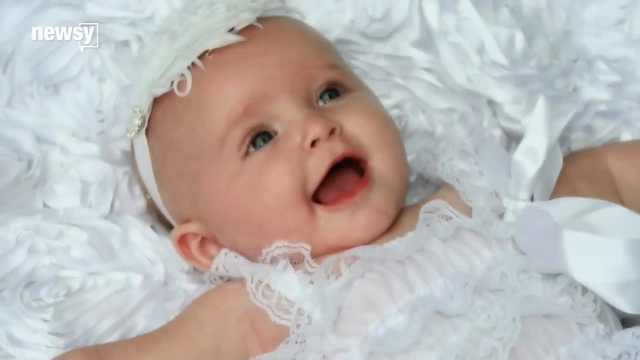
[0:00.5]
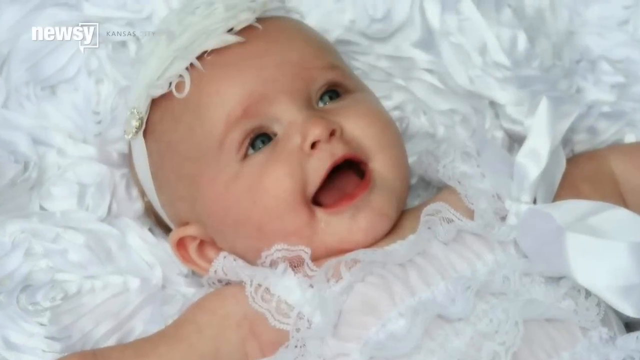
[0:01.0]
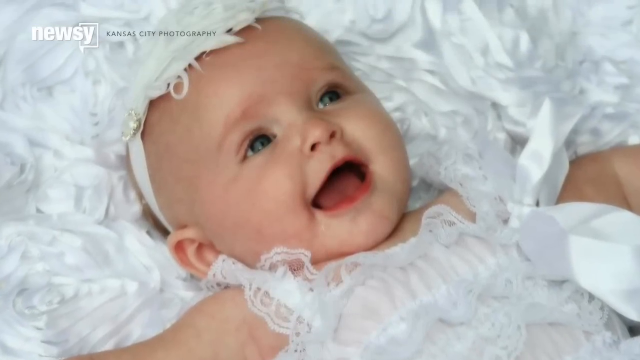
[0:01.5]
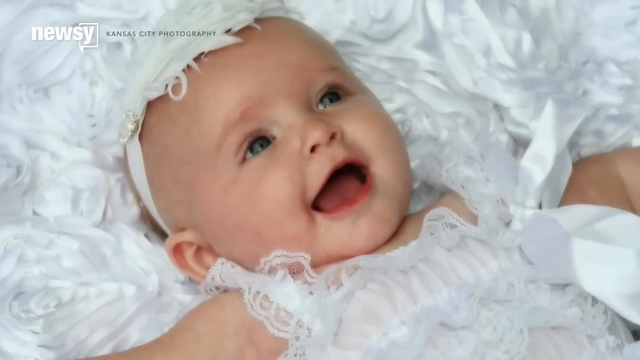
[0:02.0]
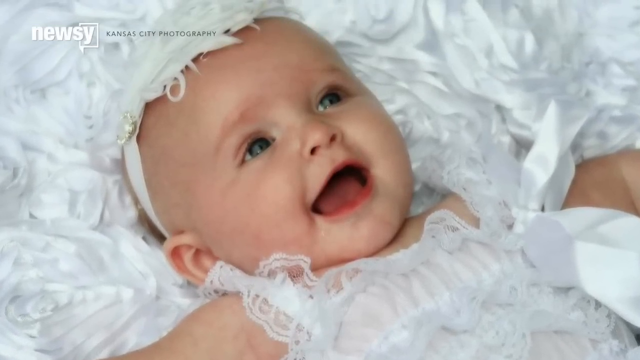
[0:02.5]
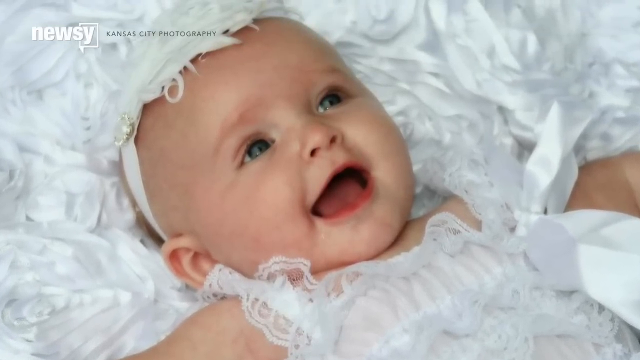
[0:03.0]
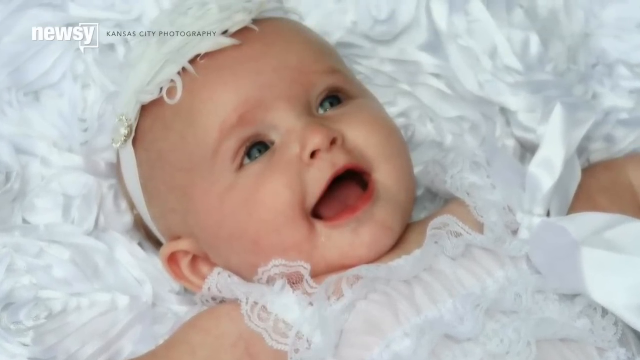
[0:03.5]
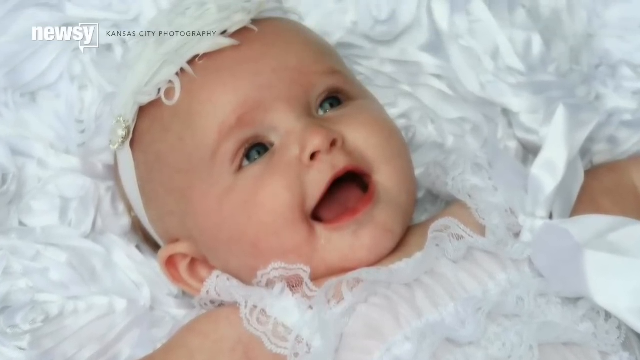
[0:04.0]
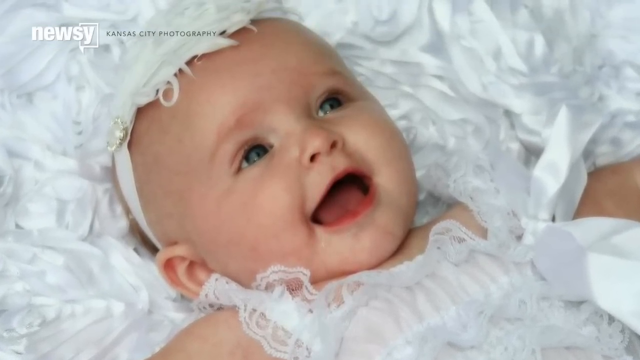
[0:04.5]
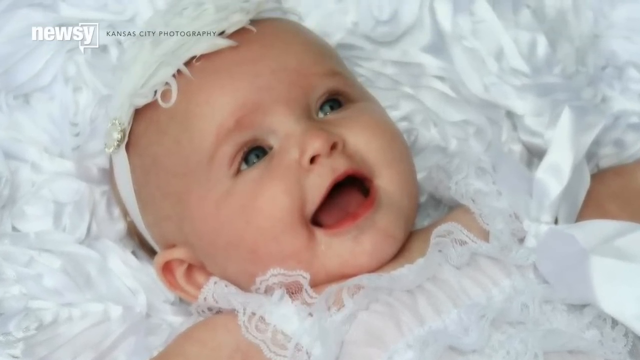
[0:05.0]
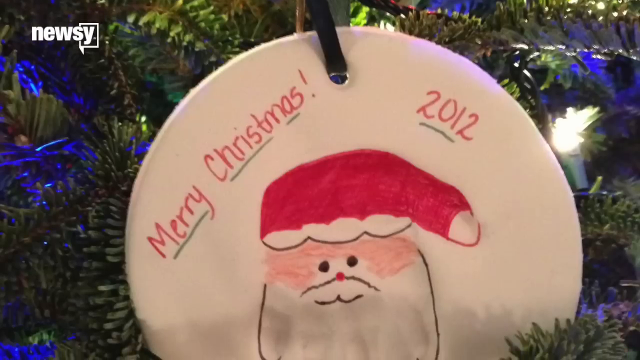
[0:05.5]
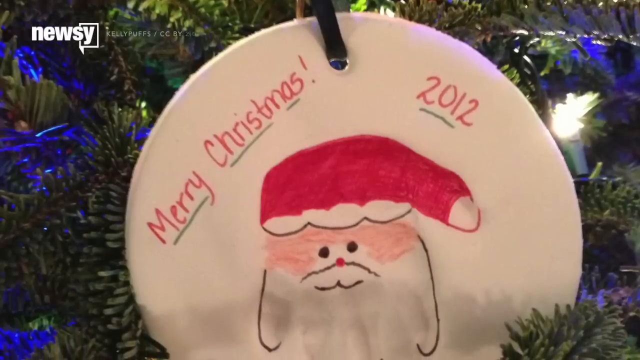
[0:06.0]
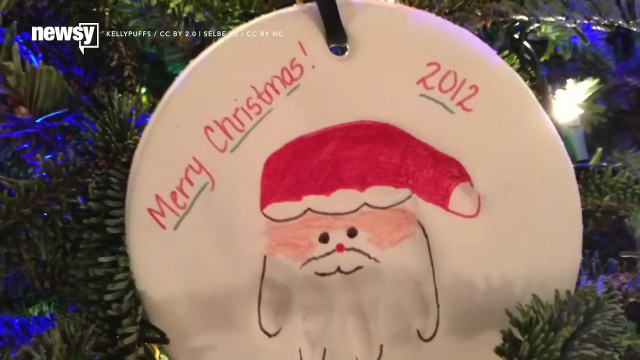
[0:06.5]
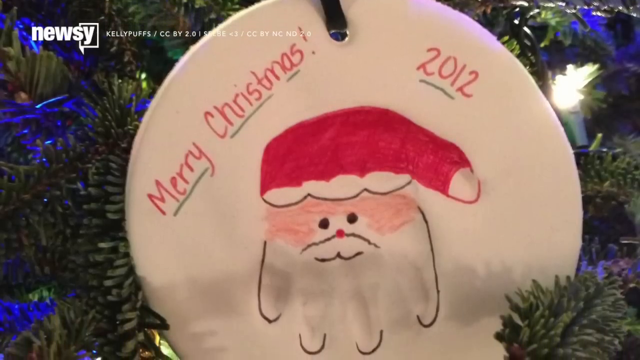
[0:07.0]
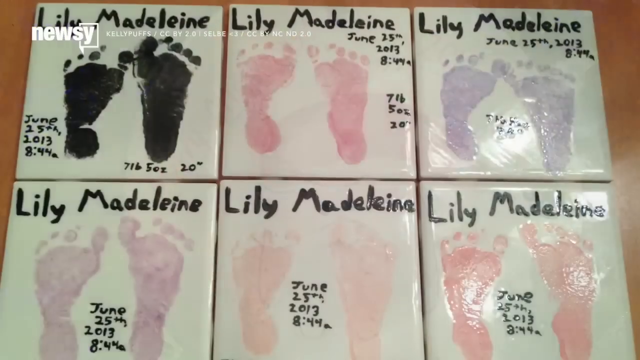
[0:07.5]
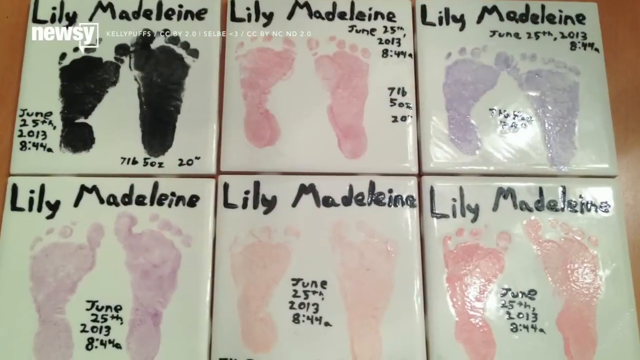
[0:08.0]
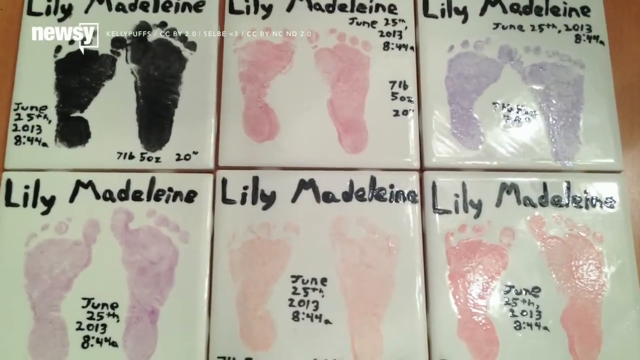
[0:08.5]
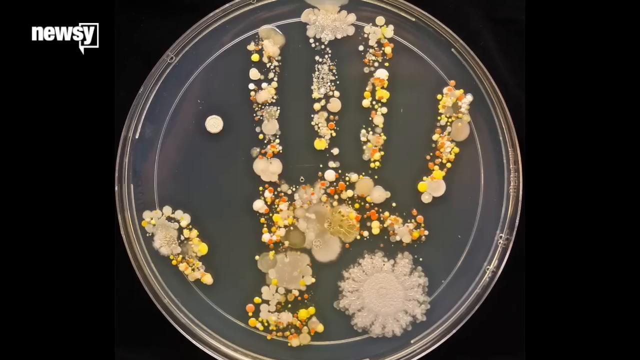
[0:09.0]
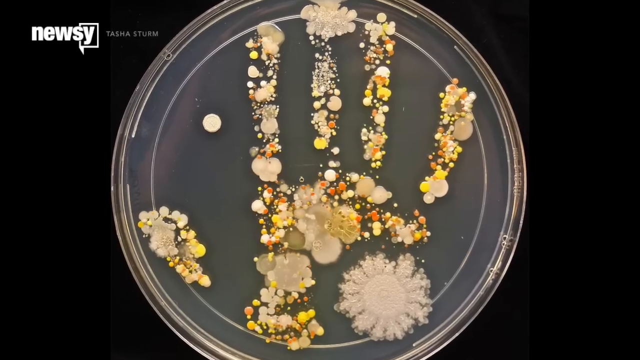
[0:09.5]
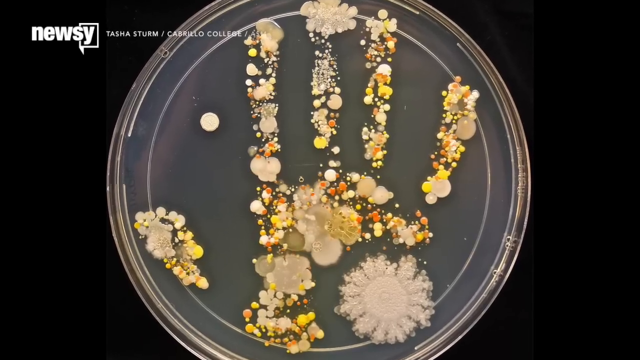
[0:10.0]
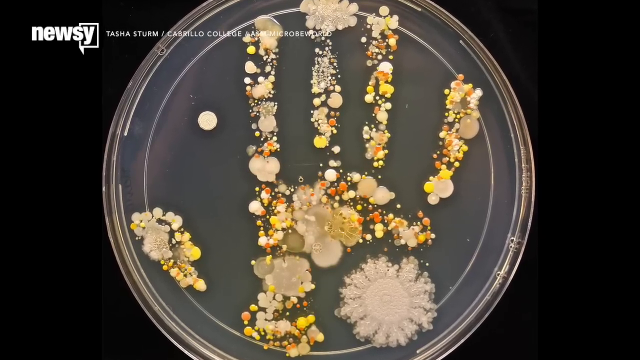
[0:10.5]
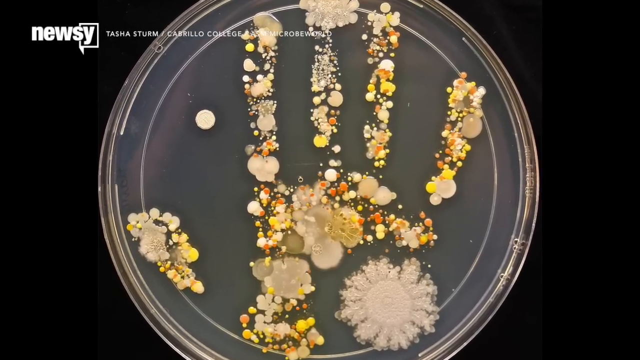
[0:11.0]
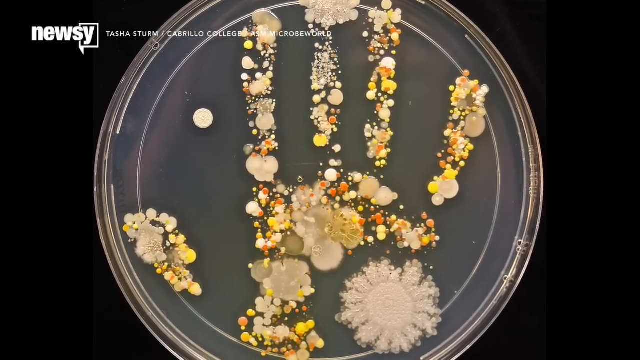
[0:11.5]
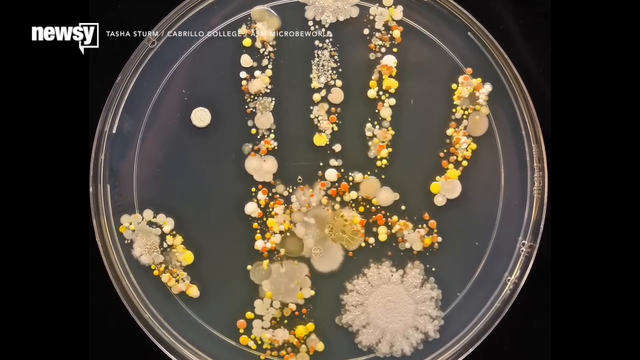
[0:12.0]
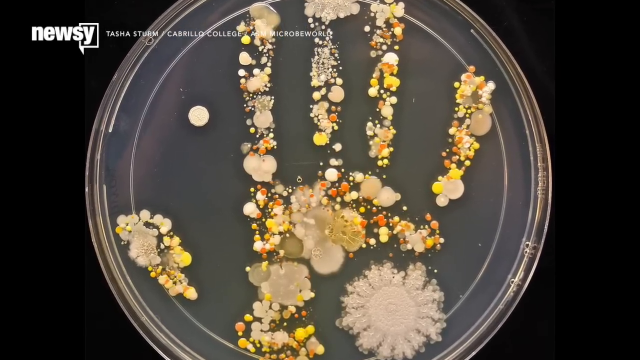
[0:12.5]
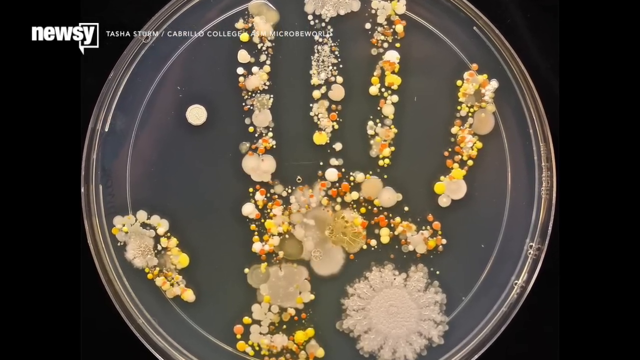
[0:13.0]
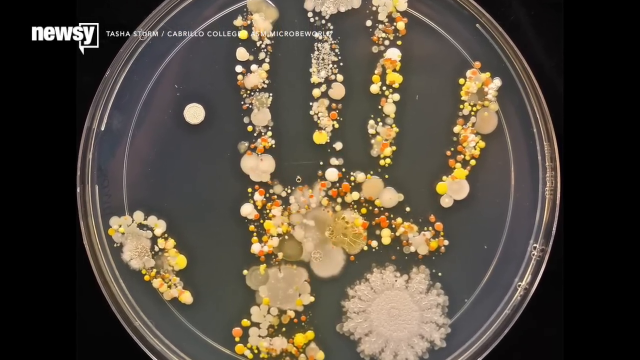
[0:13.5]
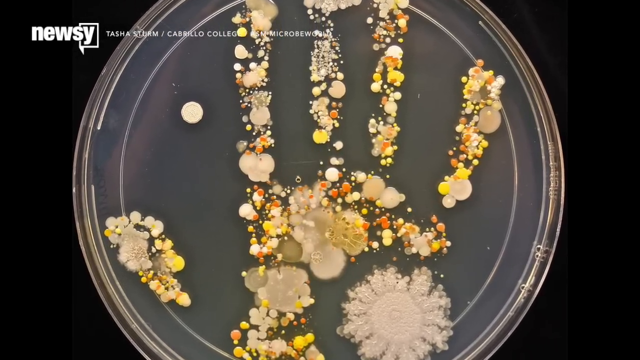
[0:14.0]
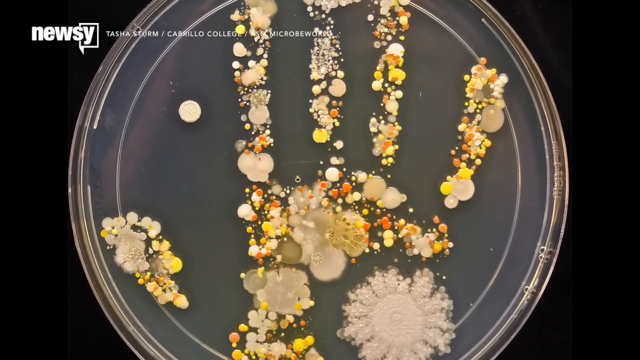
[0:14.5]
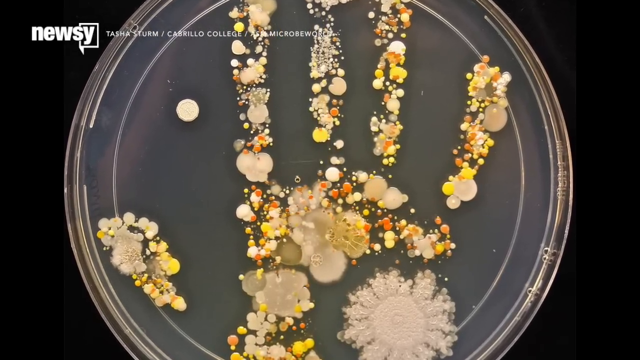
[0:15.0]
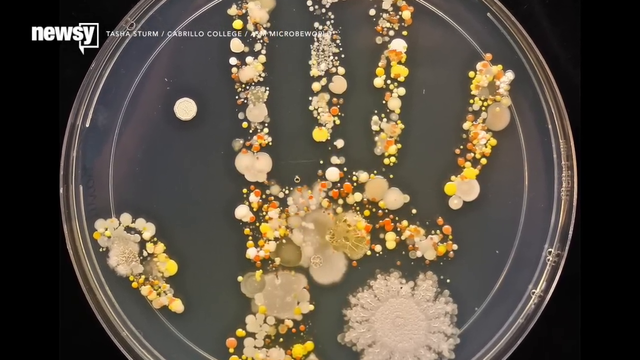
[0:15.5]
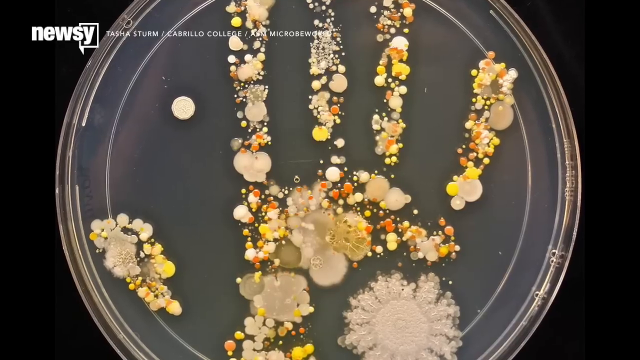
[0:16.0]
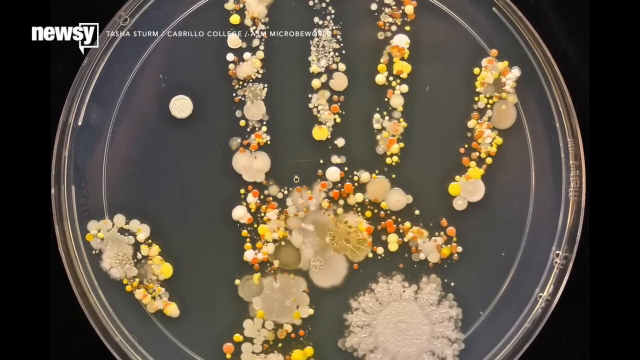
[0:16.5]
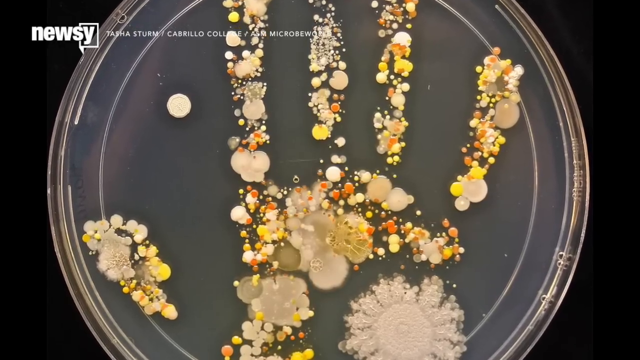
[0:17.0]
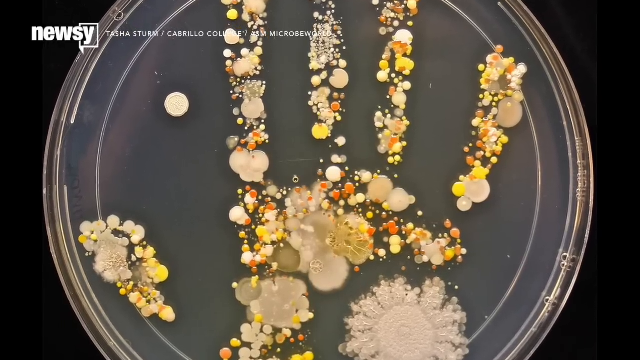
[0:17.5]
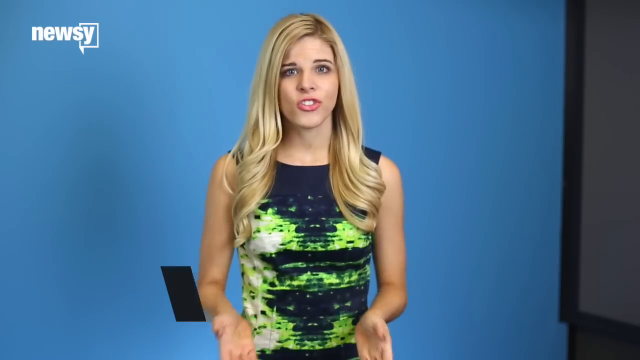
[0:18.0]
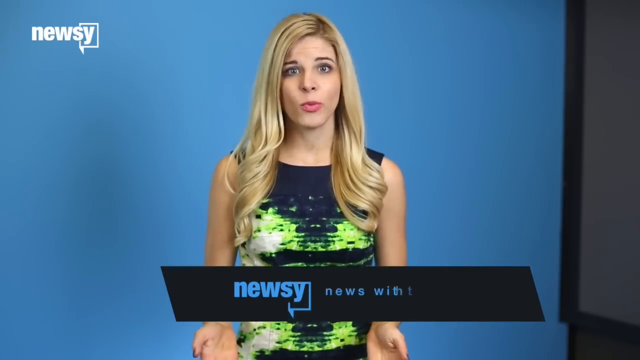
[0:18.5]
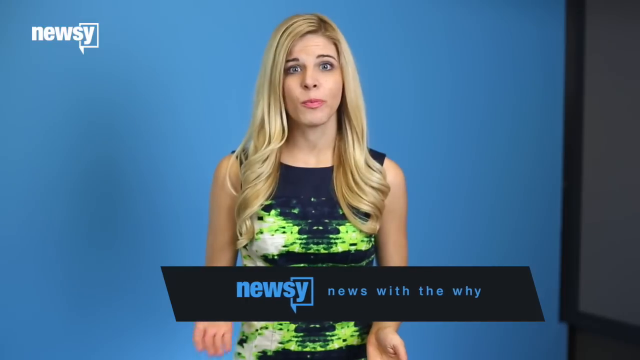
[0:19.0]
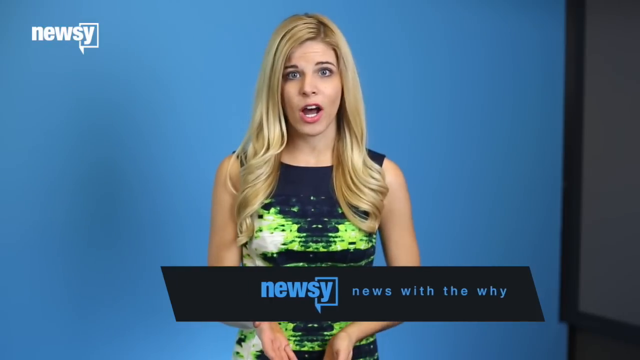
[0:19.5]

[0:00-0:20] A close-up shows a baby dressed in a lacy white costume with a large white satin bow. To the right of the top of the costume there are straps; the dress is sleeveless apart from the straps, which have lace on their outside edges. The baby's mouth is open and the baby is smiling, looking upwards to the person taking the picture, with a smile that shows recognition. The baby wears a satin ribbon headdress with a feather and a silver embellishment to one side. The baby appears to be dressed for a baptism or christening and is lying against a bed of white, possibly flowers, material or a white rug. The camera moves slightly closer to the baby, and a title at the top reads "Newsy Kansas City photography". Next comes a close-up of a Christmas decoration on a Christmas tree: a circle with a ribbon on it, reading "Merry Christmas 2012" in red writing underlined in black pen, with a drawing of Father Christmas outlined in black with a red hat. There are white lights on the tree. A series of six tiles follows, each with the name Lily Madeleine at the top and showing different footprints. The top left footprint is black, the next is a pink footprint, and the top right tile also reads Lily Madeleine; the tiles carry the date June 25th 2013 with 8.44 and a weight of 7 pounds 5 ounces, all with the same date. The second row is also titled Lily Madeleine, showing footprints in different colours. Then a close-up shows a petri dish with a handprint made of different moulds and spores, in white, grey, orange and yellow dots, and the camera moves in closer. Finally, a woman named Katherine with long blonde hair, wearing a navy blue and lime green patterned dress, is standing in front of a blue background with the caption "Newsy".